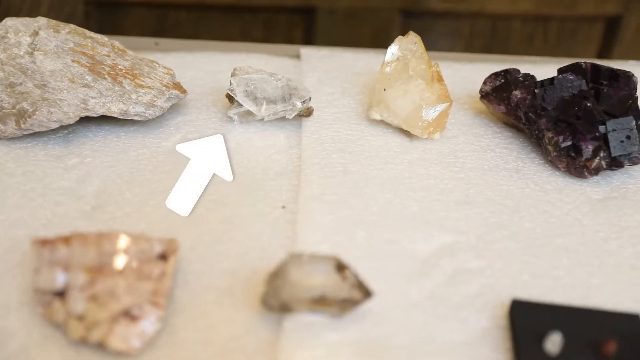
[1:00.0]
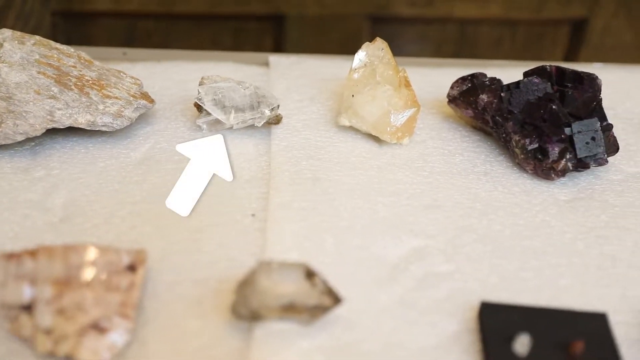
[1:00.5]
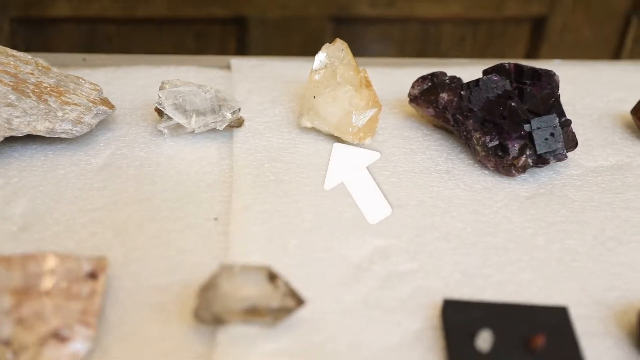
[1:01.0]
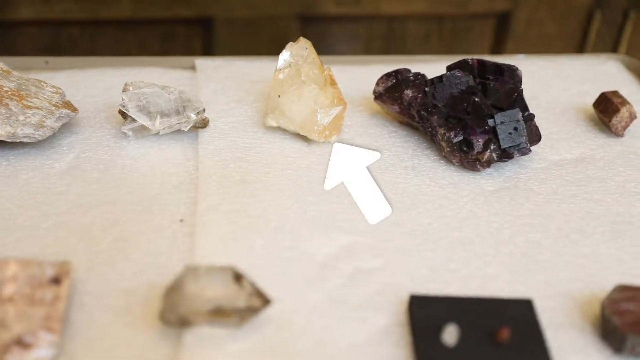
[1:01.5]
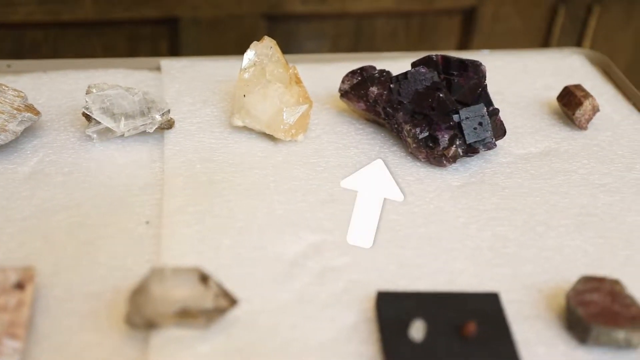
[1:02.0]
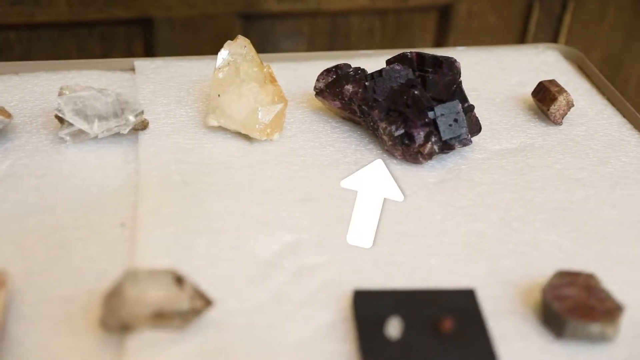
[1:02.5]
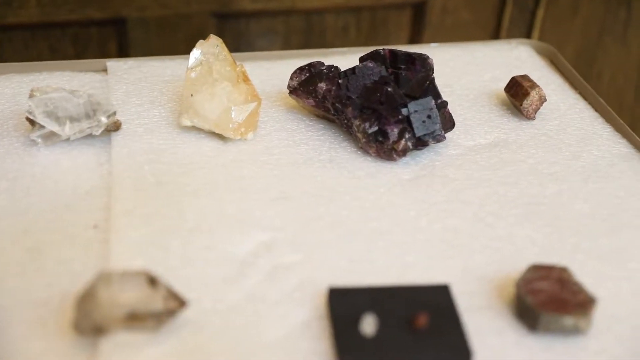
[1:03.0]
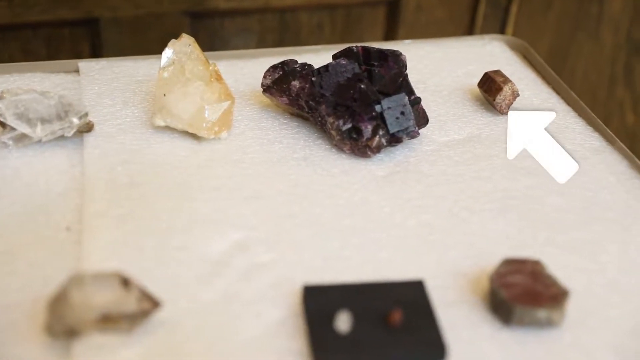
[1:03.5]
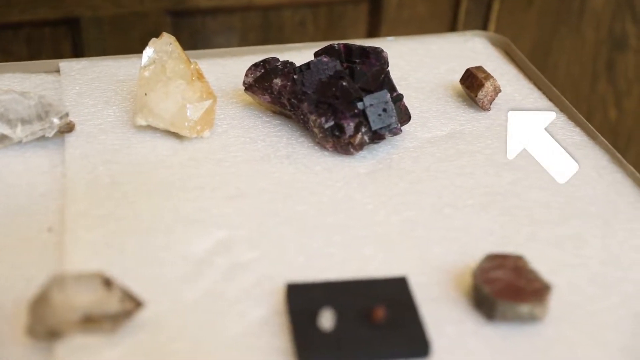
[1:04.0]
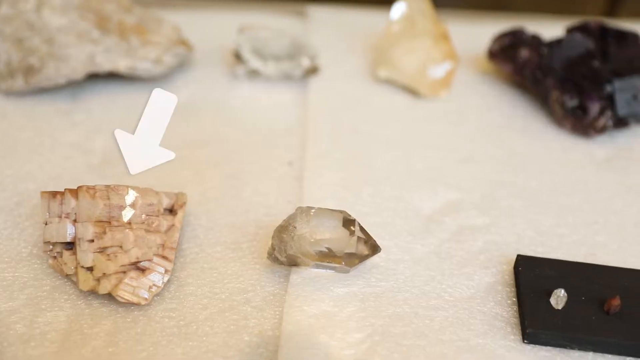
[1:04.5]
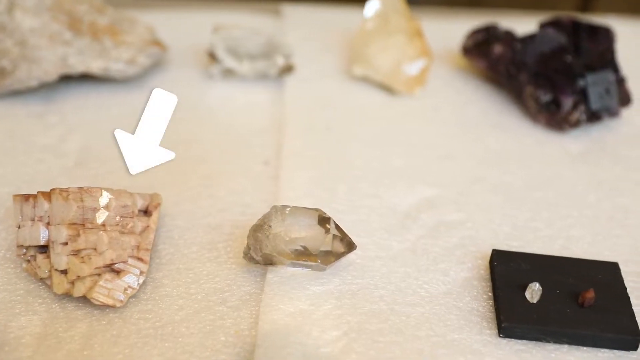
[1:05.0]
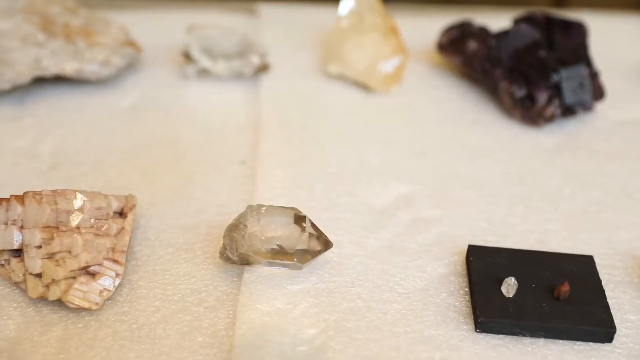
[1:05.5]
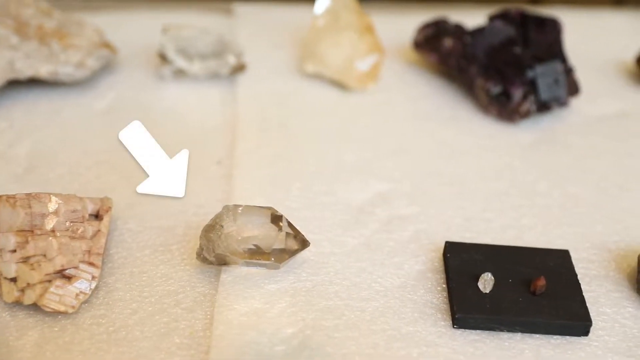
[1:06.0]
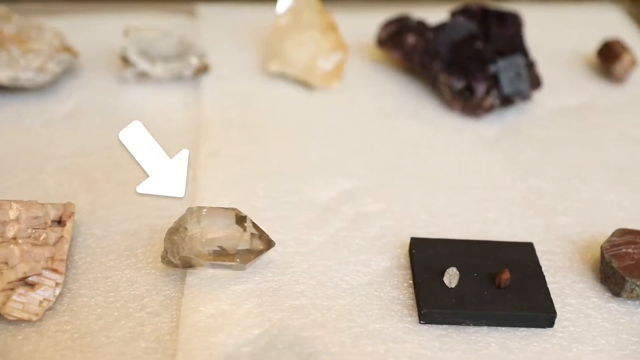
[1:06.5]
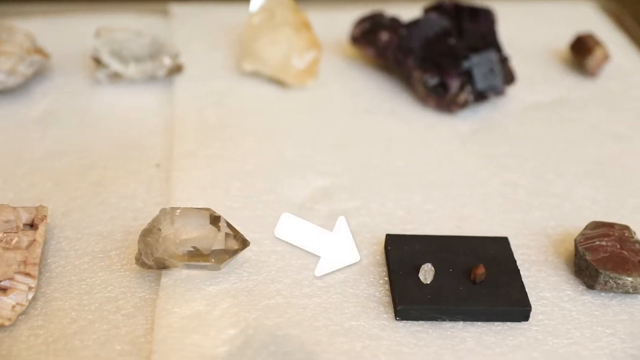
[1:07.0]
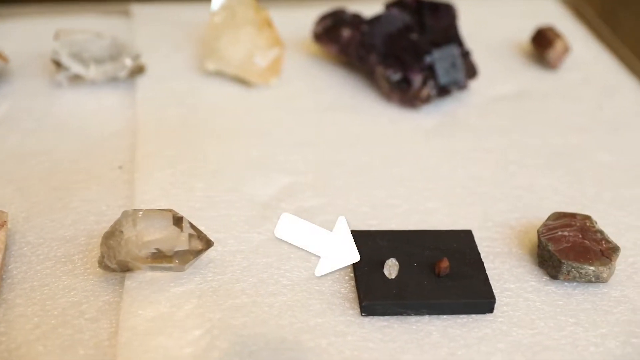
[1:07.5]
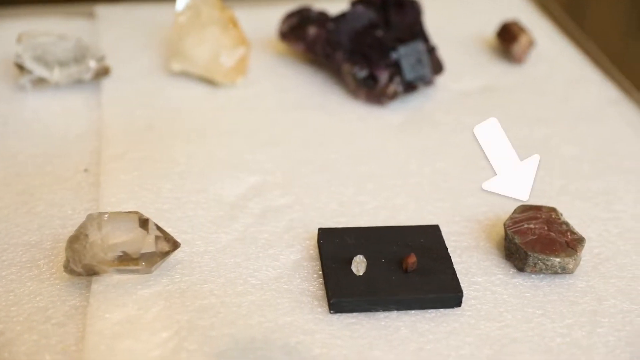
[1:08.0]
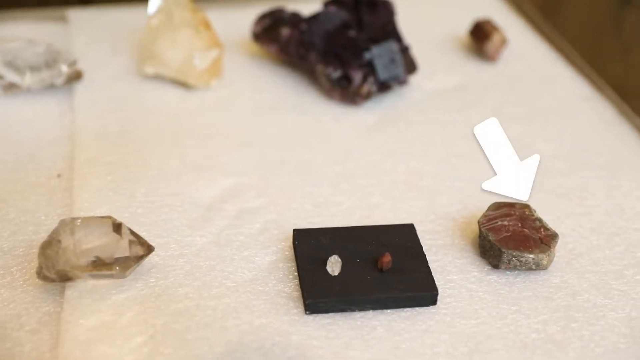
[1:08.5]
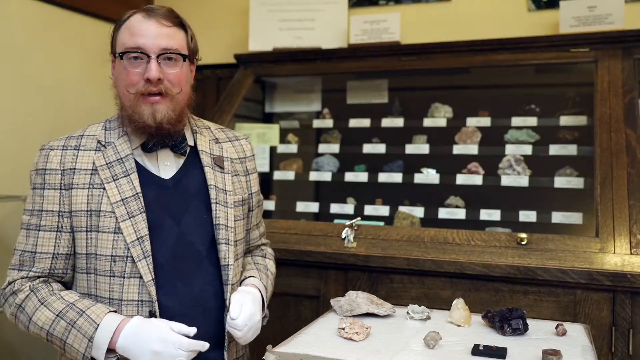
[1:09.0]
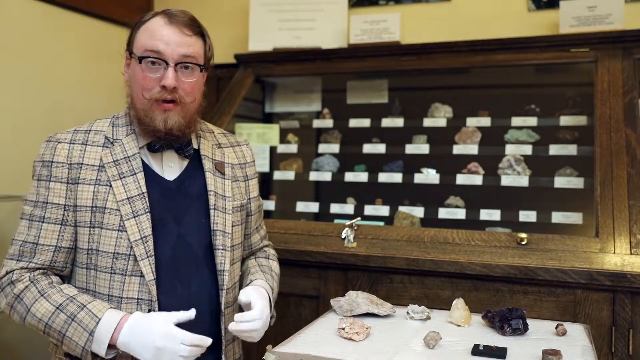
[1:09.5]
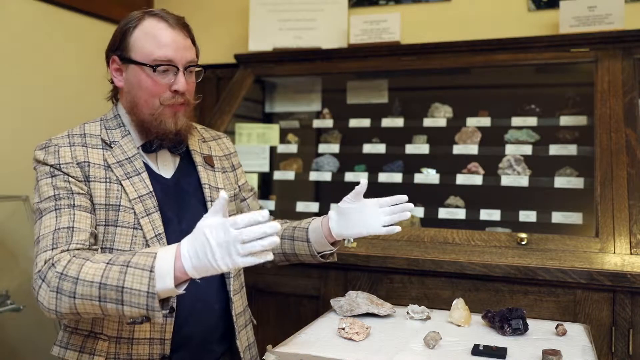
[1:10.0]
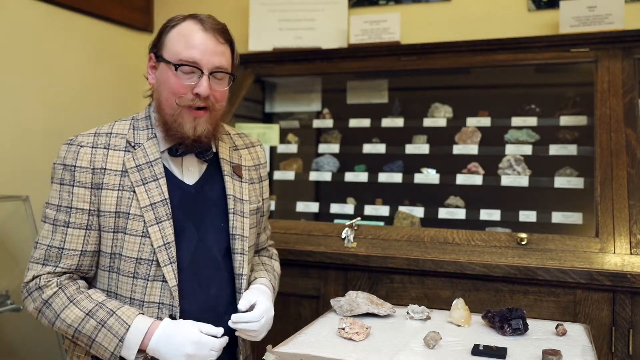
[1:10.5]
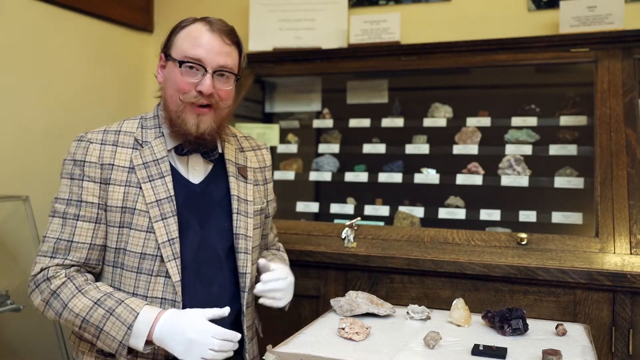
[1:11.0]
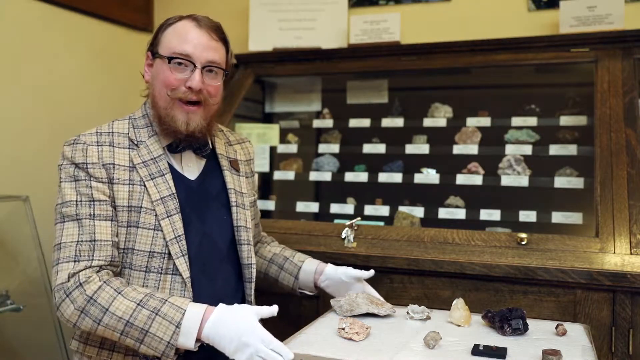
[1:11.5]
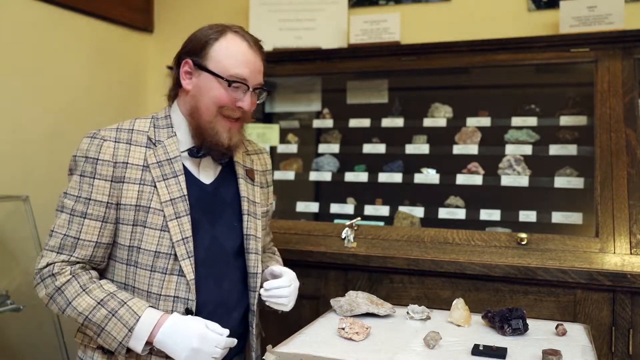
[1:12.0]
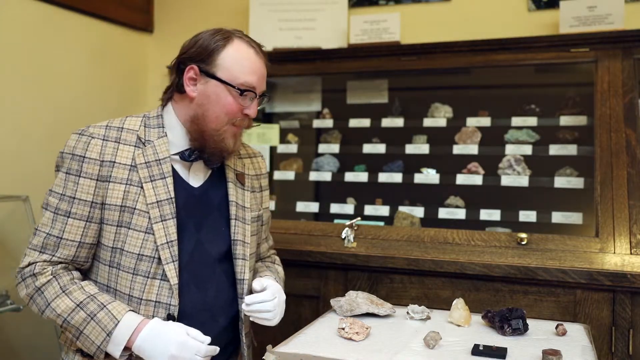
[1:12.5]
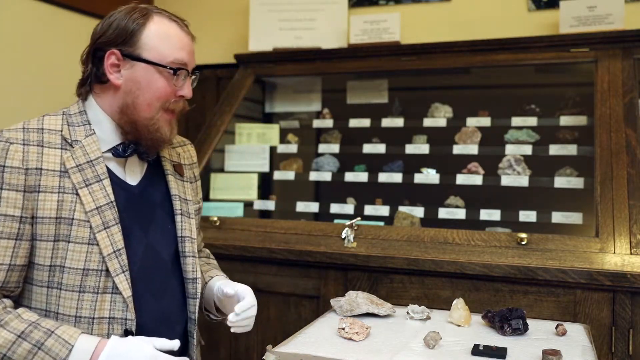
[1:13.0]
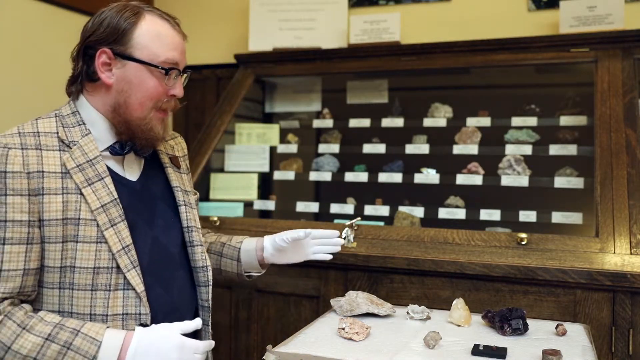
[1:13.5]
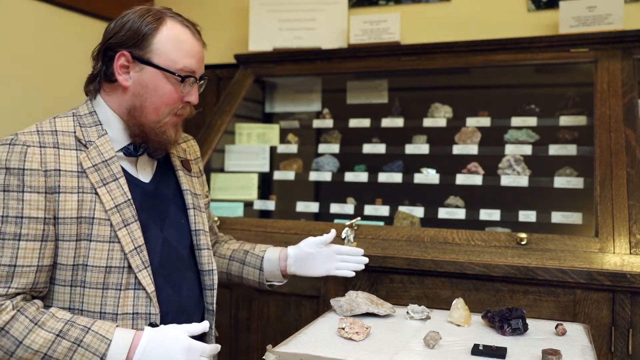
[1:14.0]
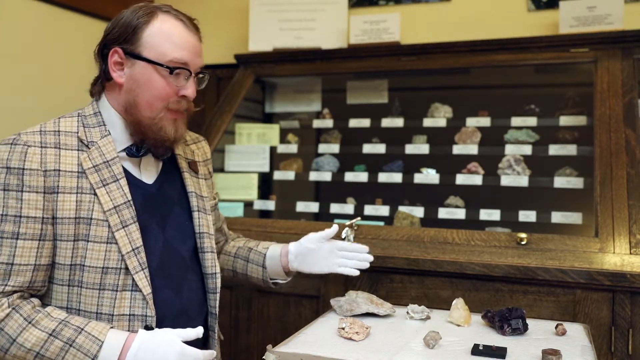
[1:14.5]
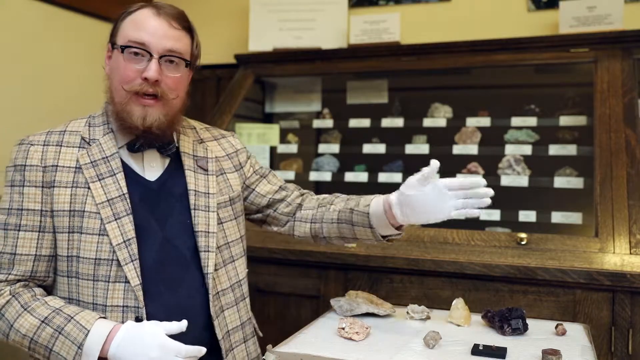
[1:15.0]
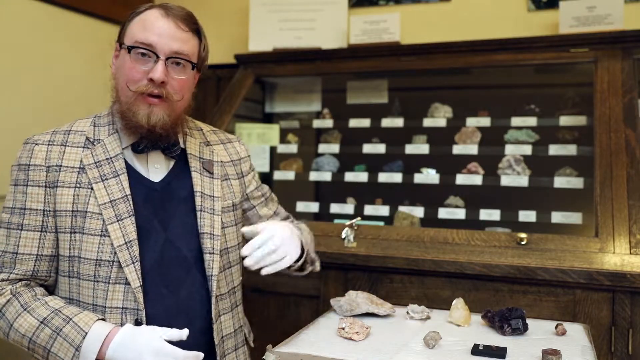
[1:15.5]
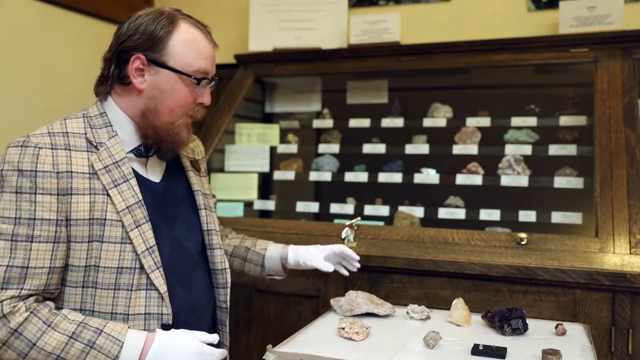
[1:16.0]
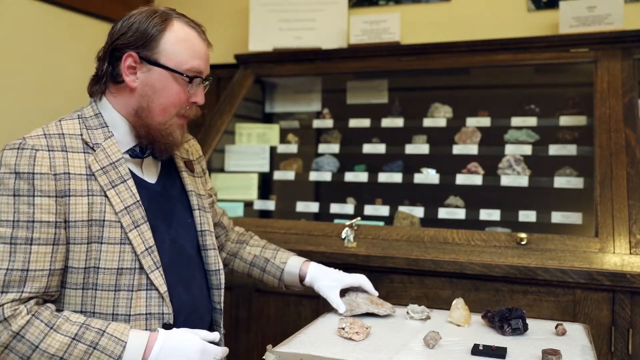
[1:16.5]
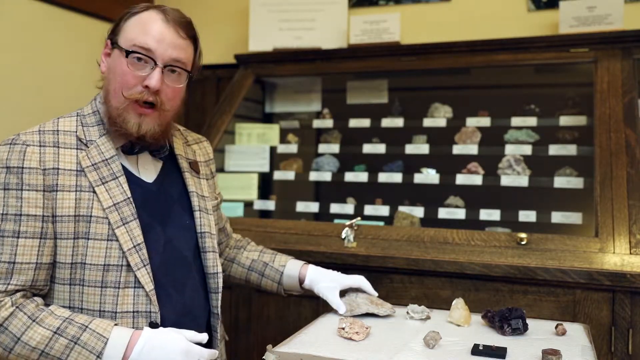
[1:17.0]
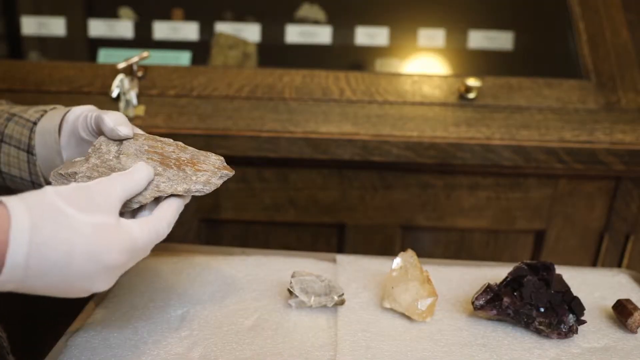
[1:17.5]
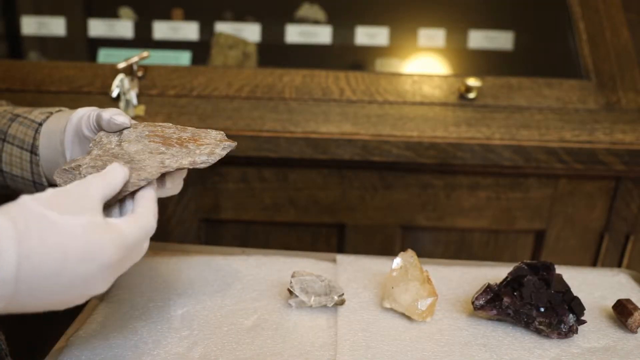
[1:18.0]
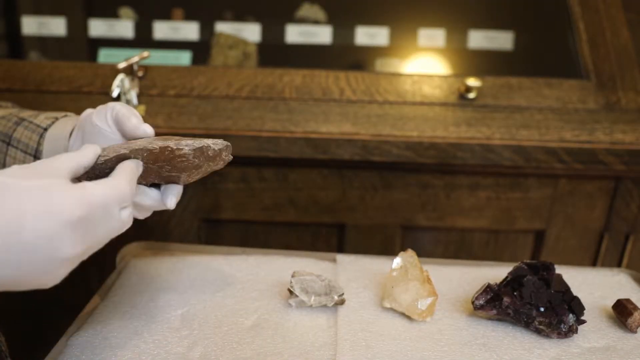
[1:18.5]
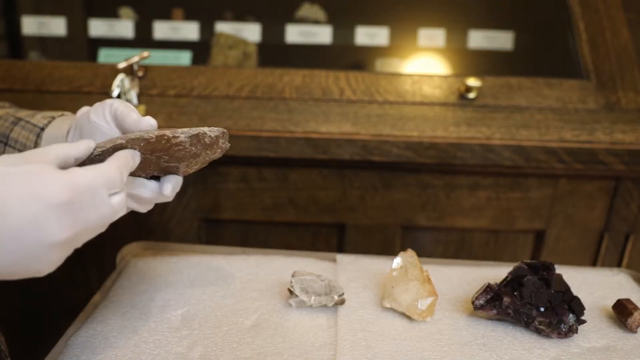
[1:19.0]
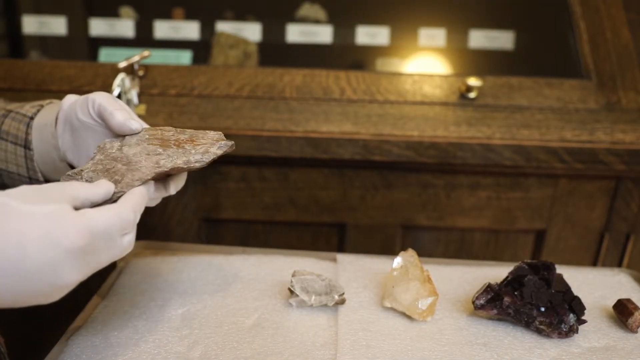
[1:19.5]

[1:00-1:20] Rock samples sit on top of a trolley in two horizontal rows, on either white tissue paper or white polystyrene. White arrows move along the samples, pointing to each in turn. The scene returns to the museum curator, who has picked up the rock from the top left of the trolley. The top row, from left to right, holds a white lump with a brown streak; a smaller, more crystalline, irregular sample of white quartz; a more yellow-coloured but clear crystalline sample; and a dark, almost brownish purple crystalline sample. The second row has four more: two clear crystalline samples, then a black square with two small crystals on it, and finally a round, ochre-brown rock sample.